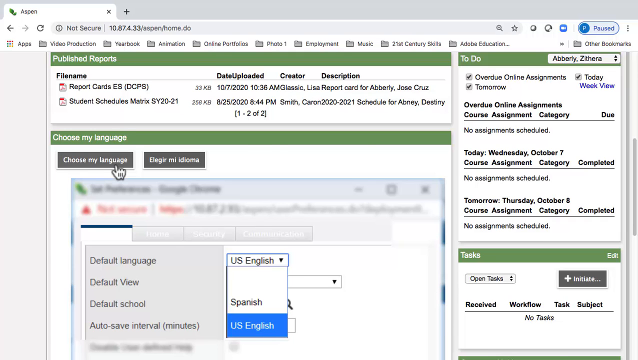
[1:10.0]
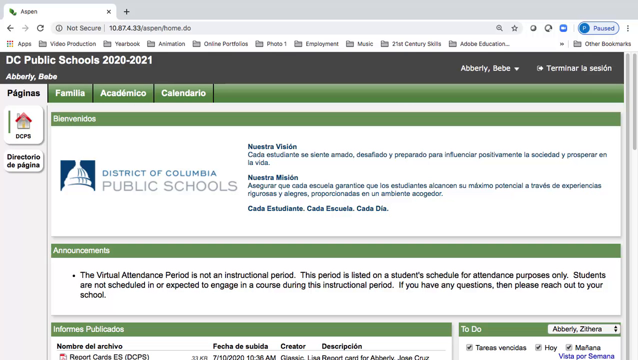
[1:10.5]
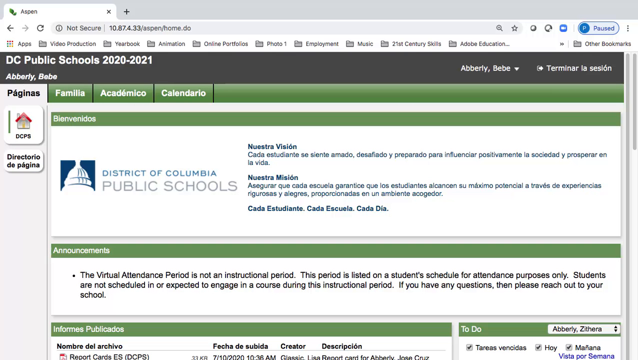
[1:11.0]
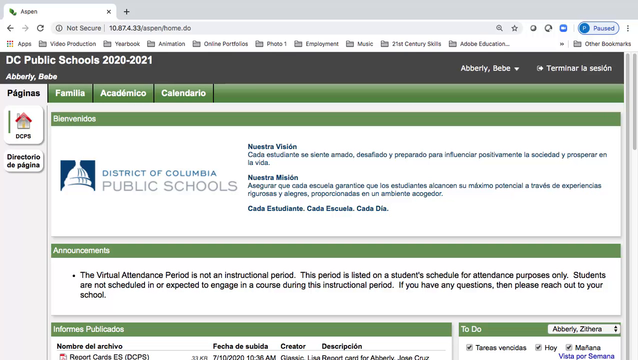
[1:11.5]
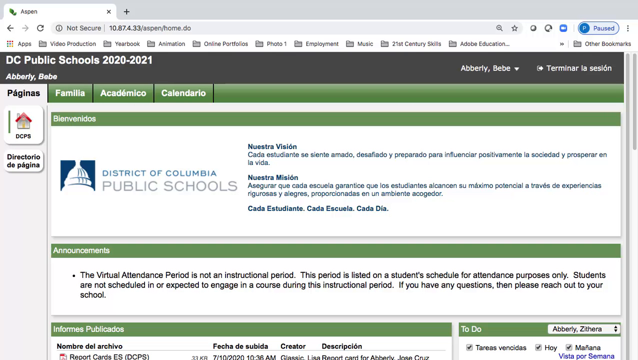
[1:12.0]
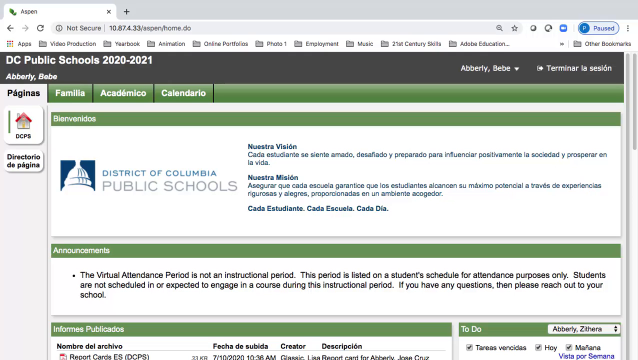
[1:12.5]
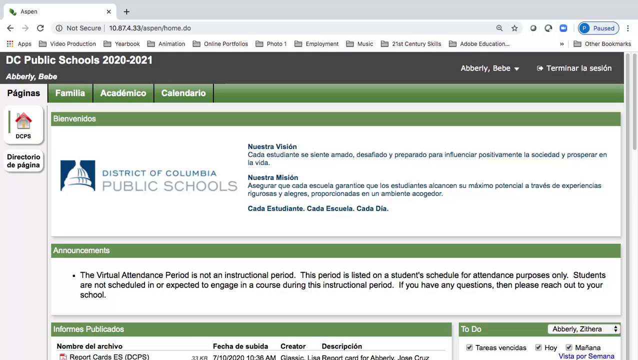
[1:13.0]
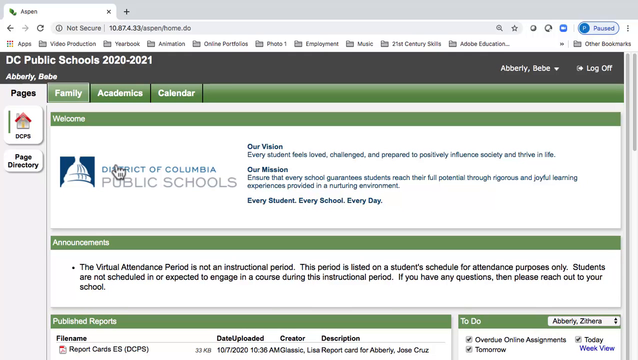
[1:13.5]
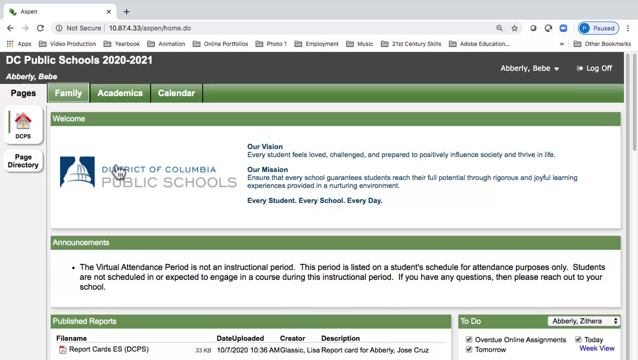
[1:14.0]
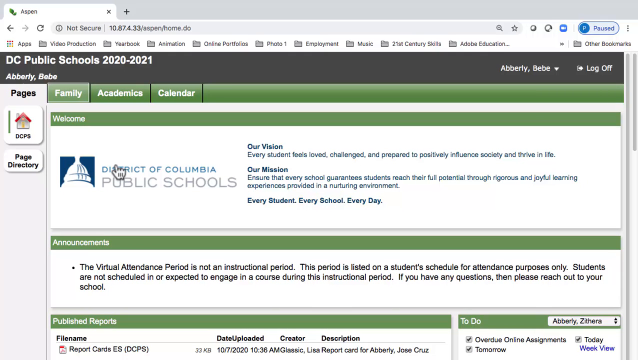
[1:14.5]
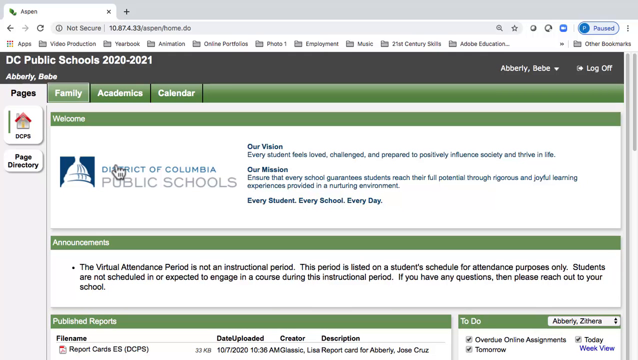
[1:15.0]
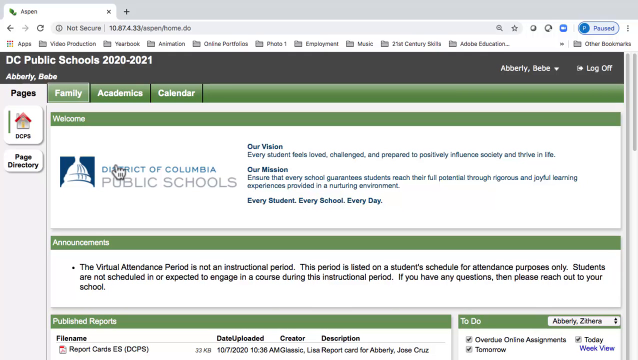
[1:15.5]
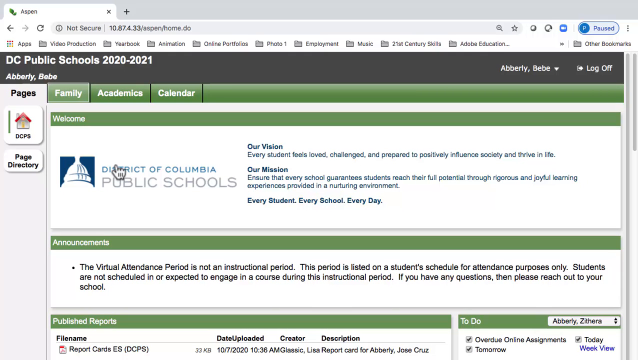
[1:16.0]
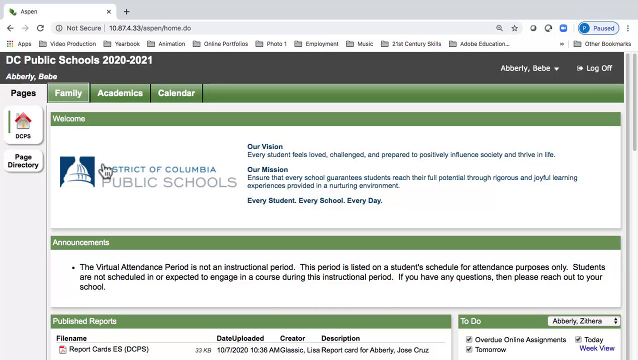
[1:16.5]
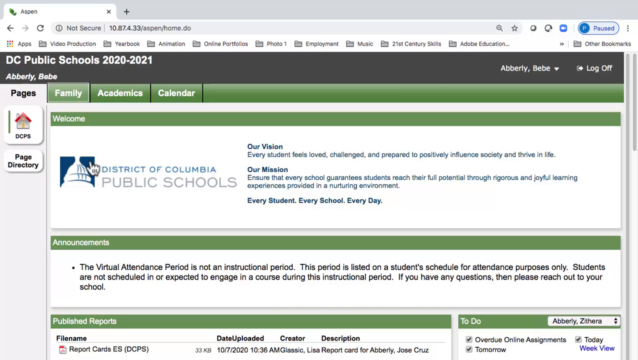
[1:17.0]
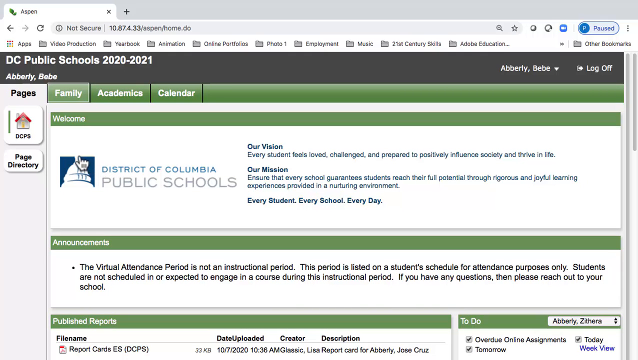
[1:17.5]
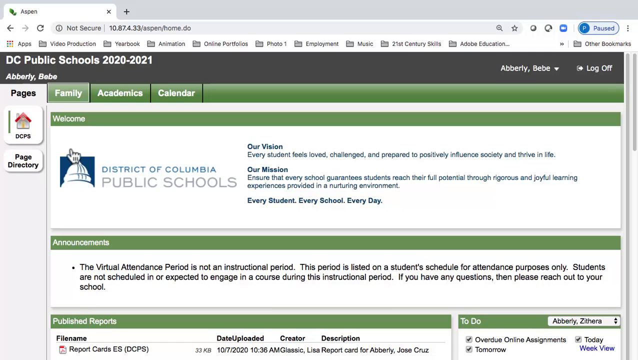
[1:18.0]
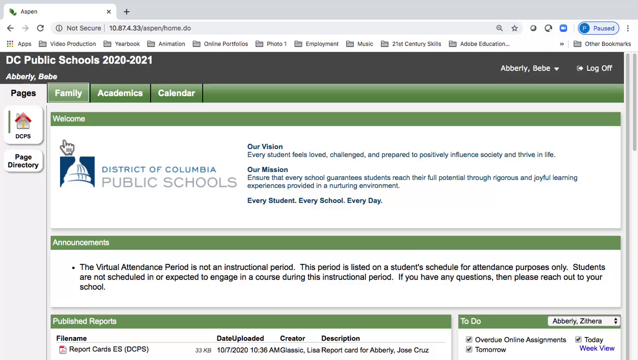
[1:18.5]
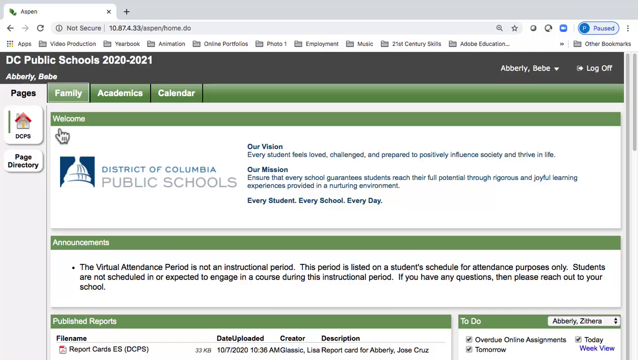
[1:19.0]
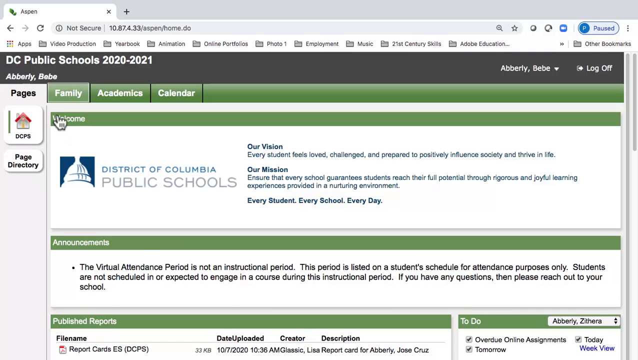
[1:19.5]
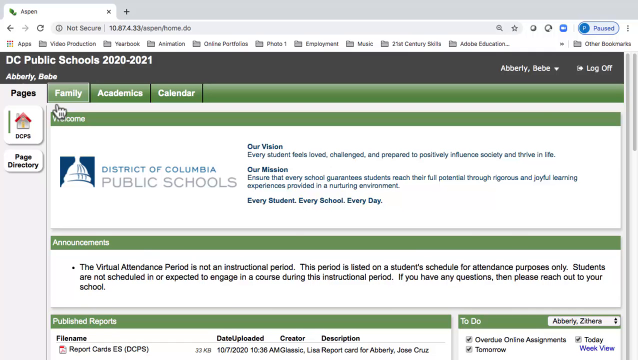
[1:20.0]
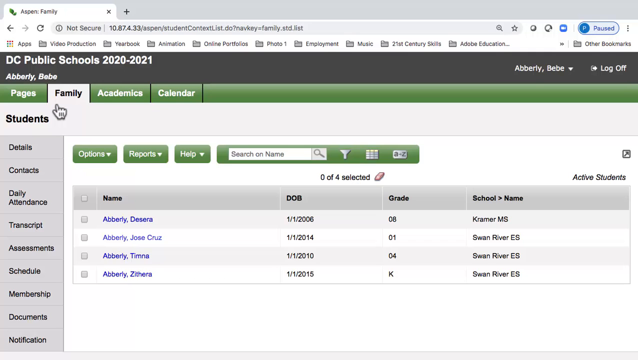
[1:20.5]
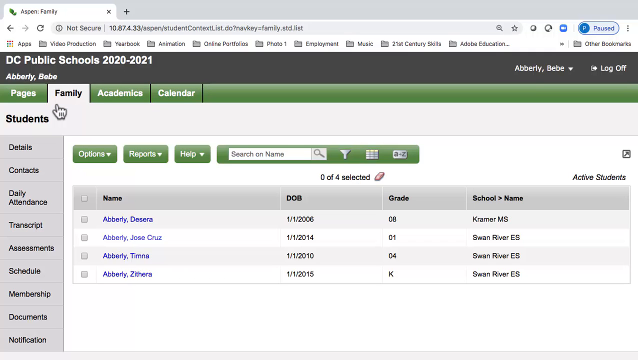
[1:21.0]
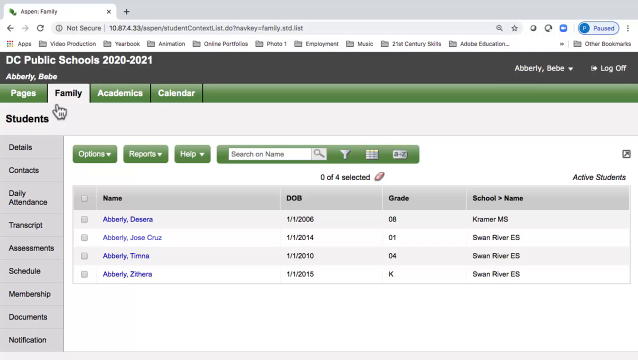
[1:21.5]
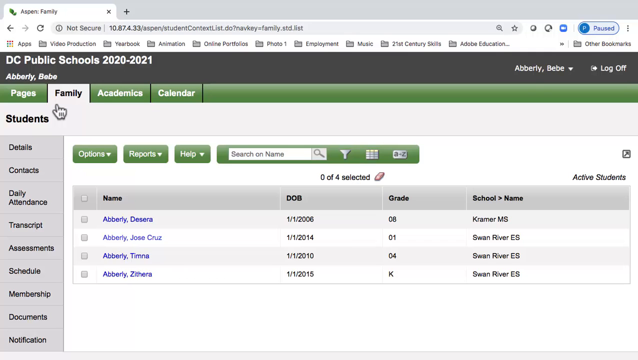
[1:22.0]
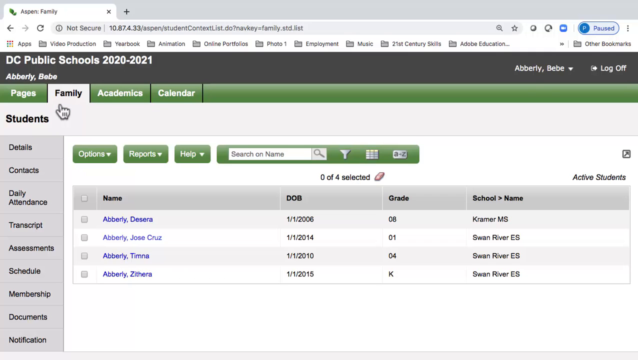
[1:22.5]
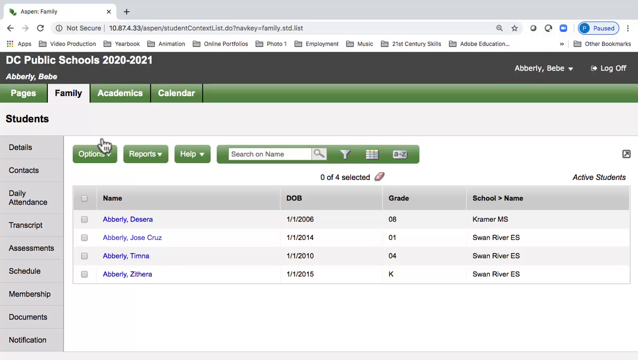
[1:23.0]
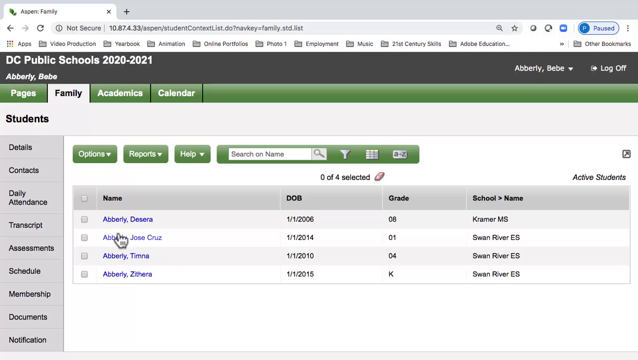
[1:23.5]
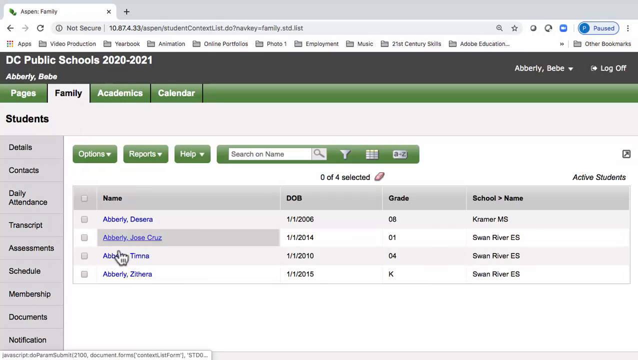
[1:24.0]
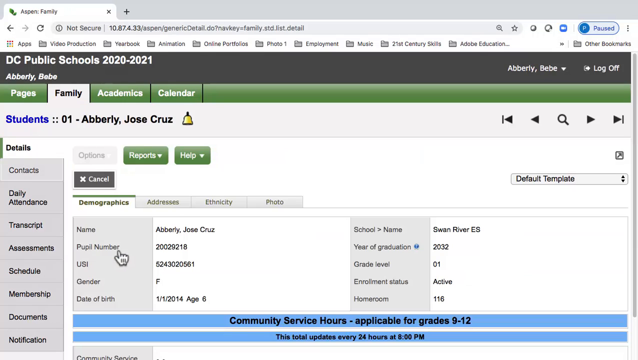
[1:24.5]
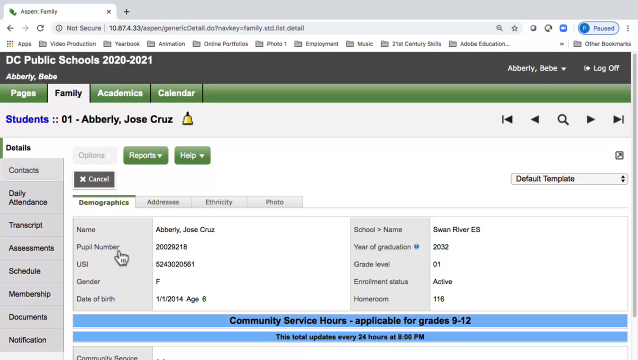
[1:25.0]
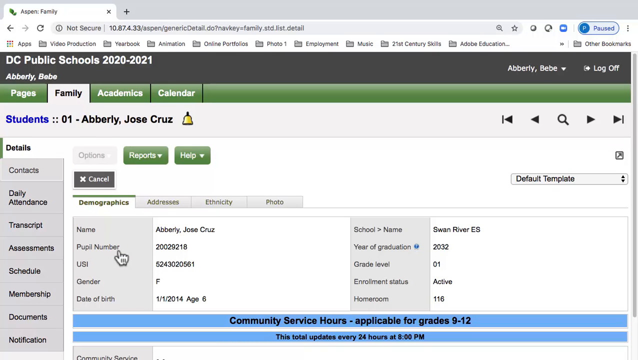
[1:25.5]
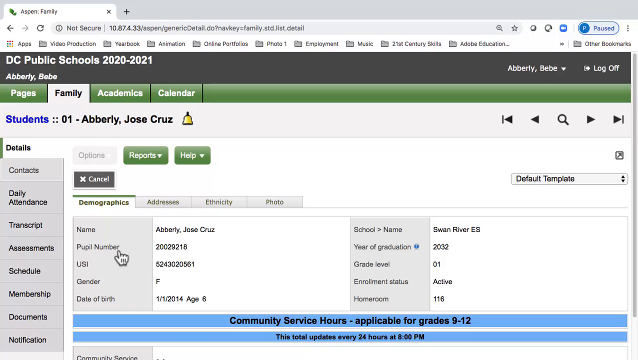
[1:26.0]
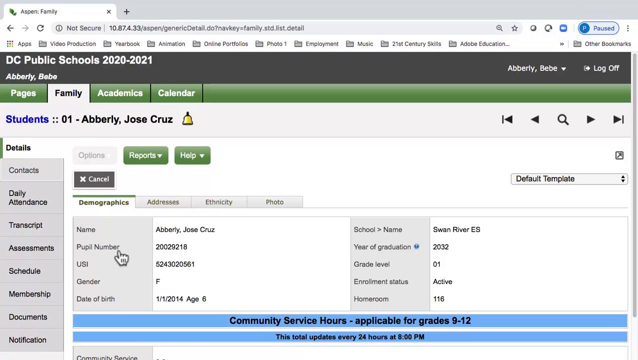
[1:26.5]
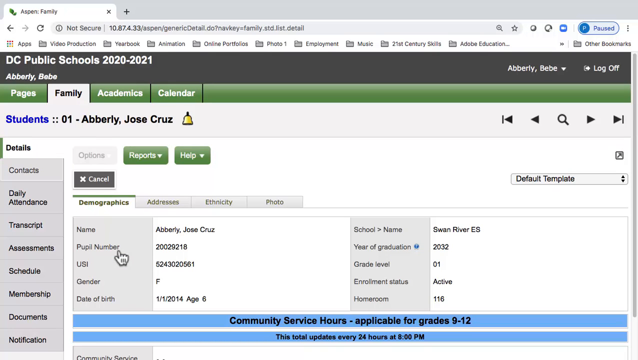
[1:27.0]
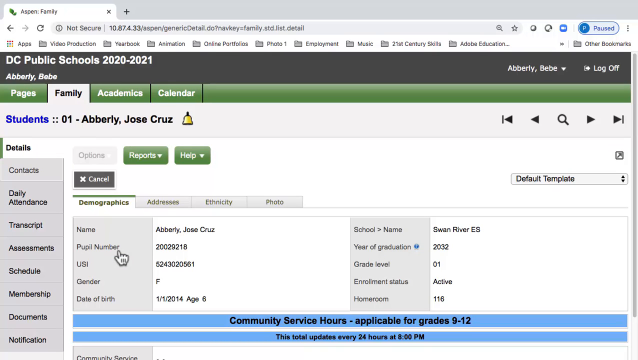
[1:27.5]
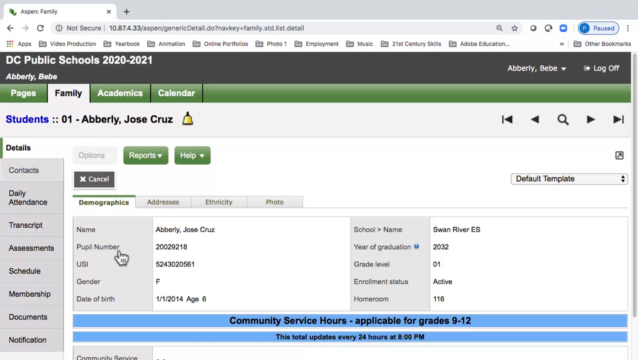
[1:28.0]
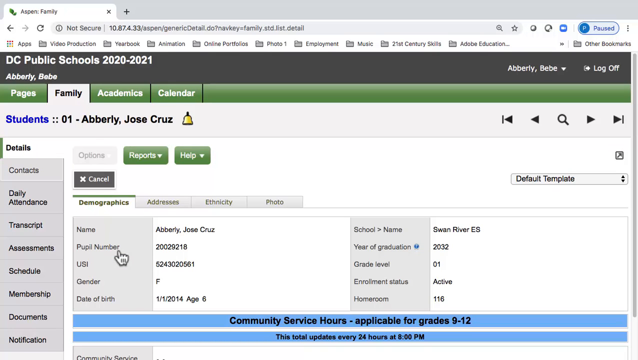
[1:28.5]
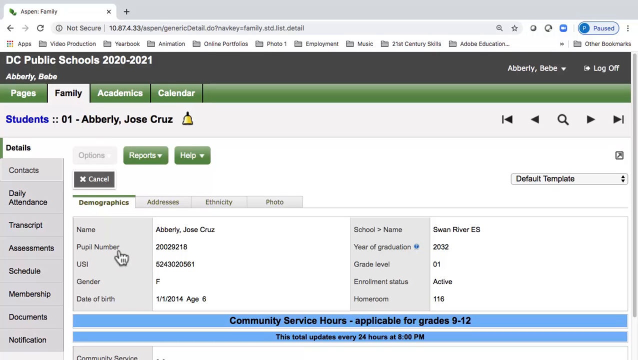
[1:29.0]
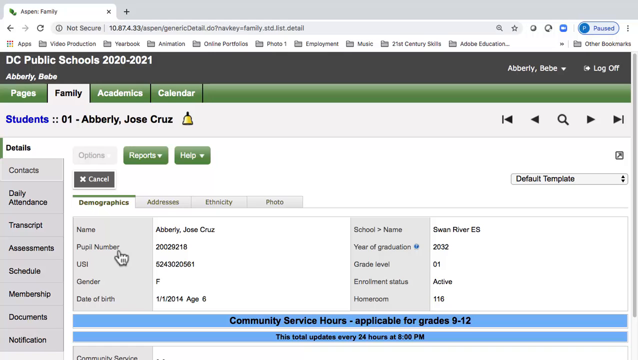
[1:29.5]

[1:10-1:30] On the DCPS Aspen homepage, everything has been switched to Spanish; after about two seconds it switches back to English. The mouse moves to the family tab at the top and clicks it, bringing up a list of students: four different students' names, all with the same last name, possibly related, along with their date of birth, grade, and school name. Above the list are tabs for options, reports, and help, a search-on-name option with a small magnifying glass, and a couple of other small options. On the left, under "students," are details, contacts, daily attendance, transcript, assessments, schedule, and membership. One of the students, Jose Cruz Everly, is clicked, opening his profile with demographics and options for address, ethnicity, and photo. The demographics section lists his name, pupil number, USI, gender, and date of birth in one column, and school name, year of graduation, grade level, enrollment status, and homeroom in the other. The mouse lingers over the pupil number but does not click anything.